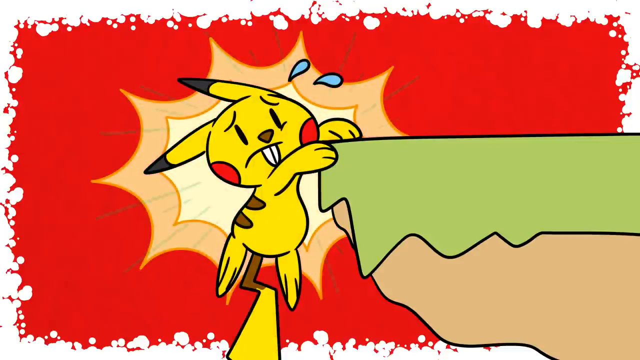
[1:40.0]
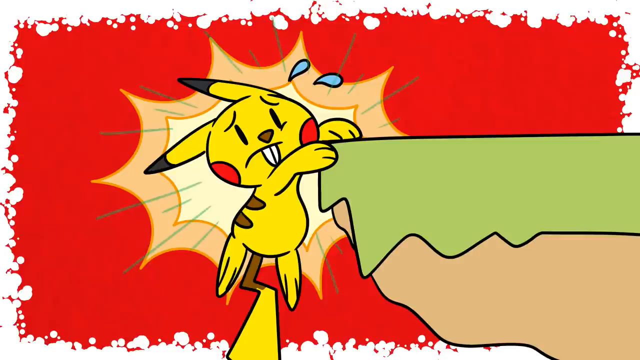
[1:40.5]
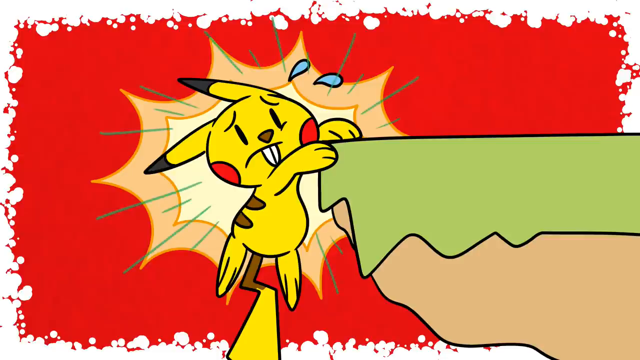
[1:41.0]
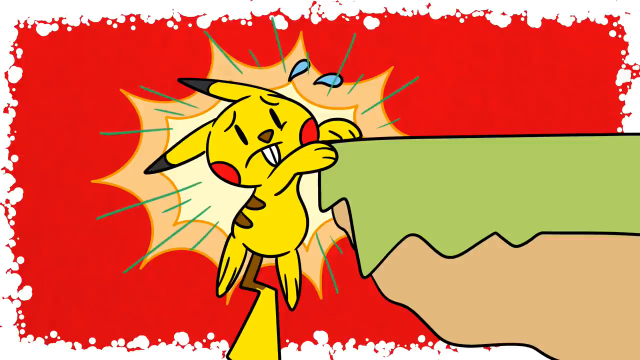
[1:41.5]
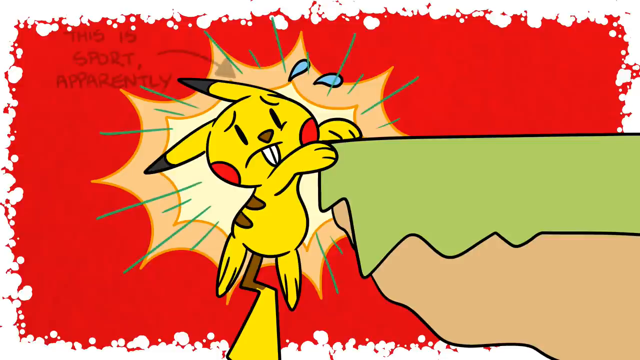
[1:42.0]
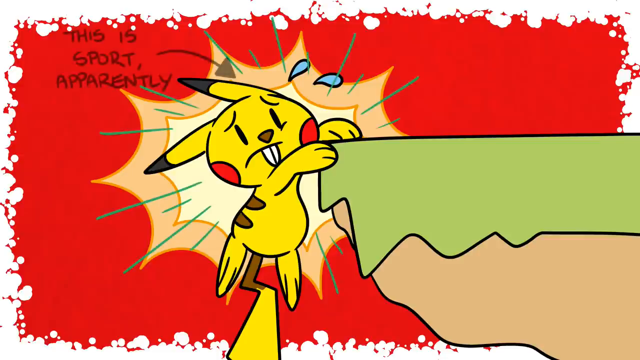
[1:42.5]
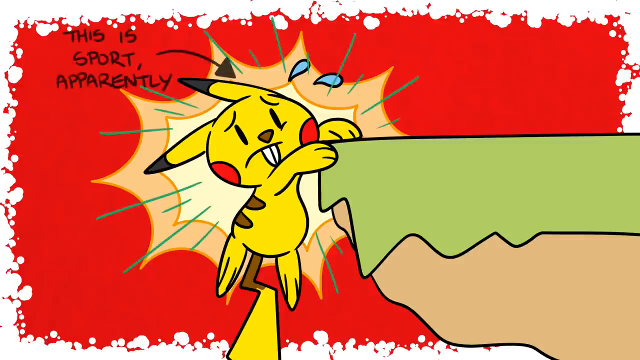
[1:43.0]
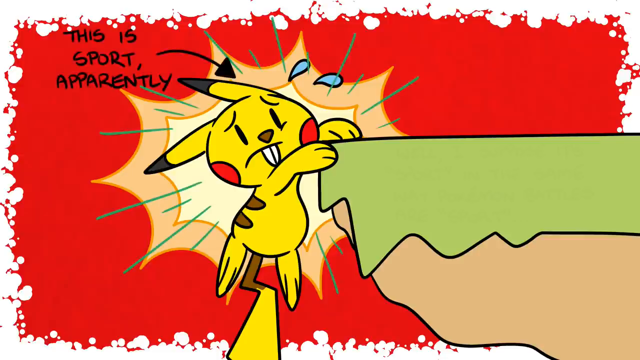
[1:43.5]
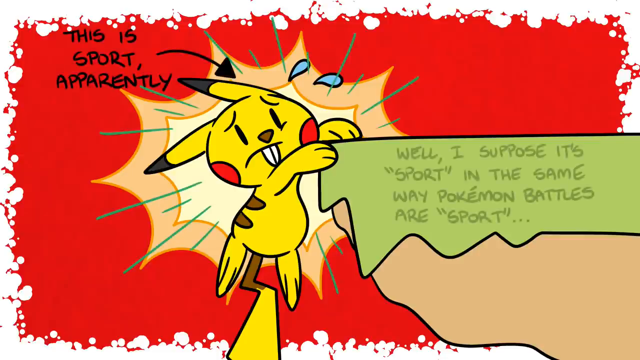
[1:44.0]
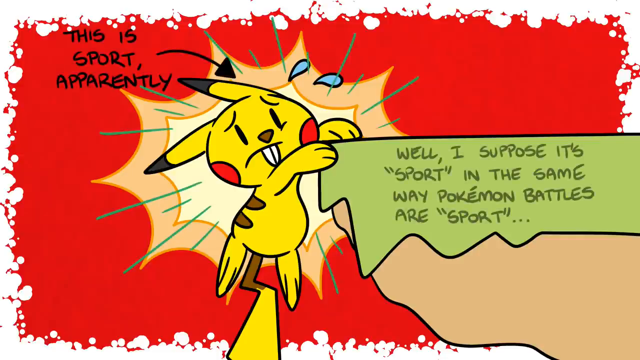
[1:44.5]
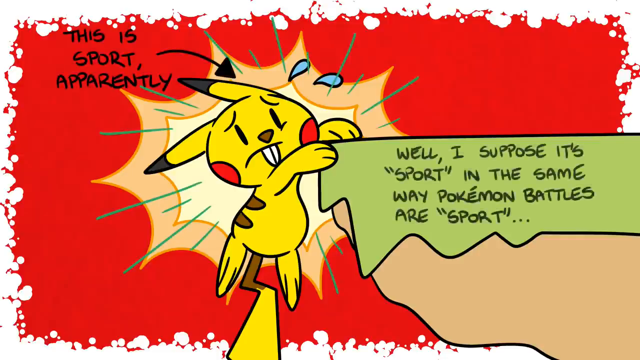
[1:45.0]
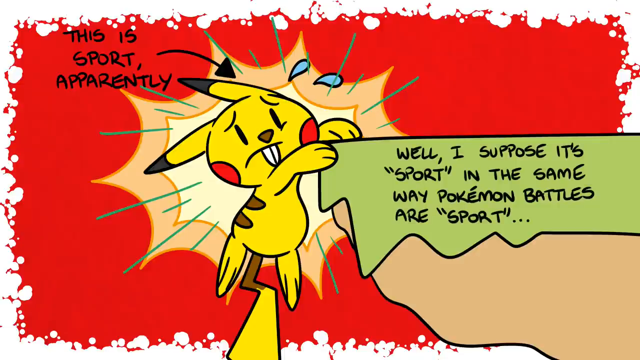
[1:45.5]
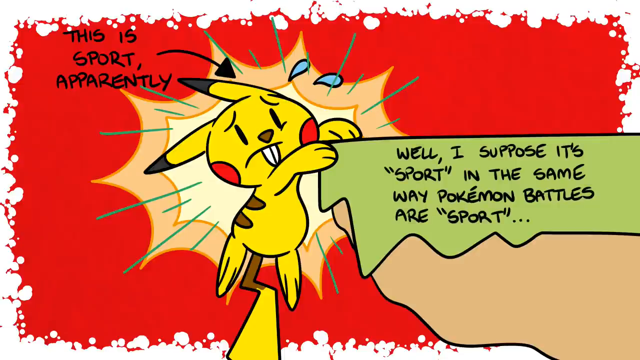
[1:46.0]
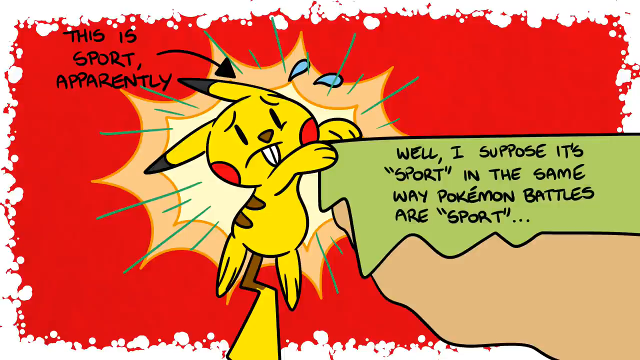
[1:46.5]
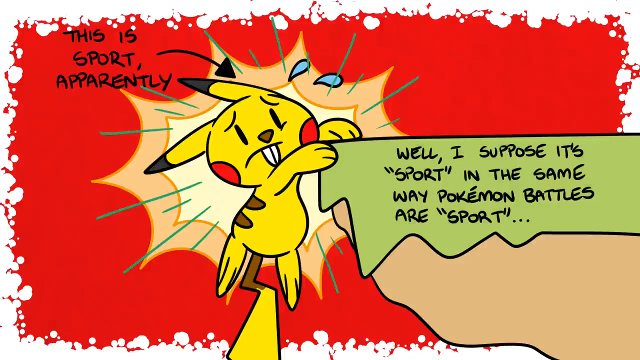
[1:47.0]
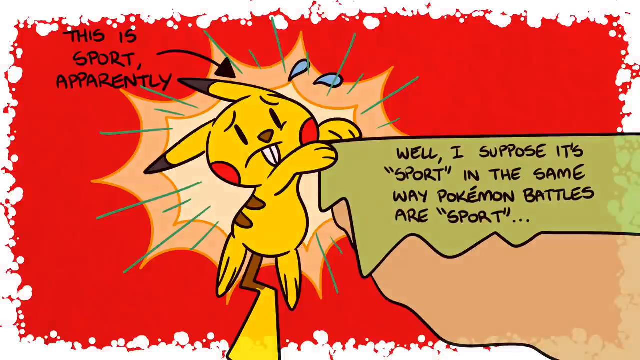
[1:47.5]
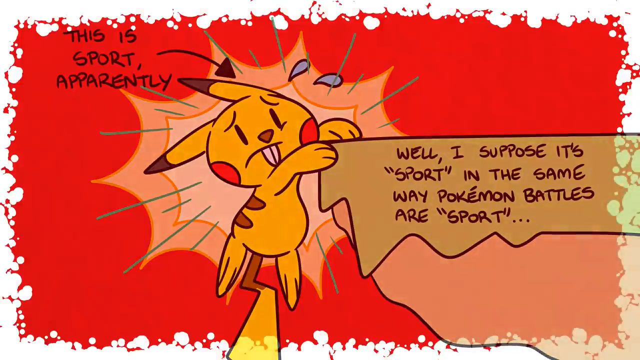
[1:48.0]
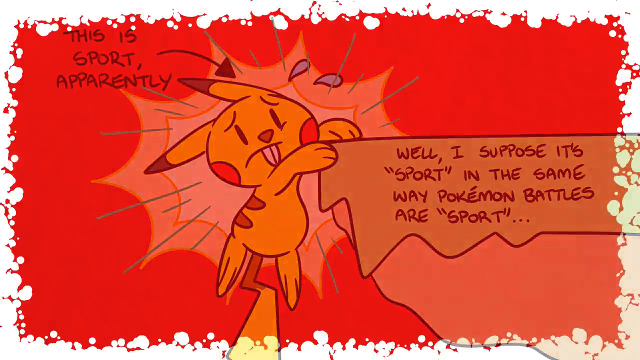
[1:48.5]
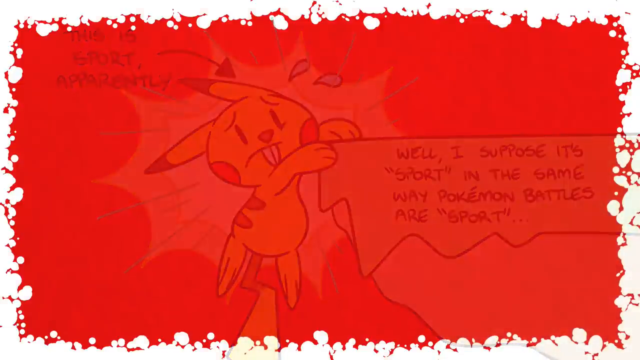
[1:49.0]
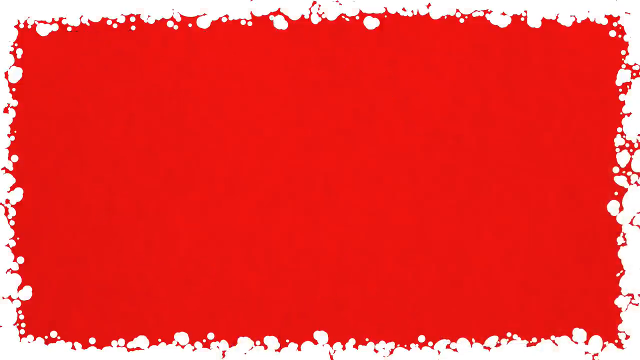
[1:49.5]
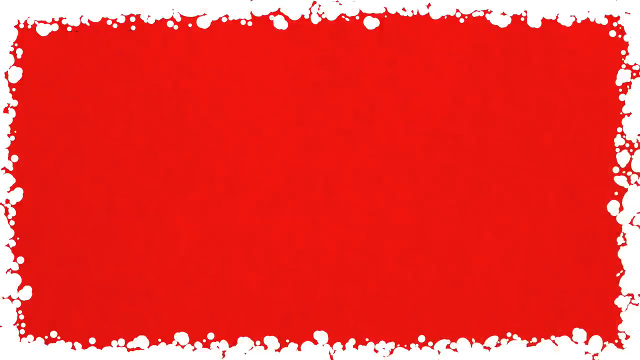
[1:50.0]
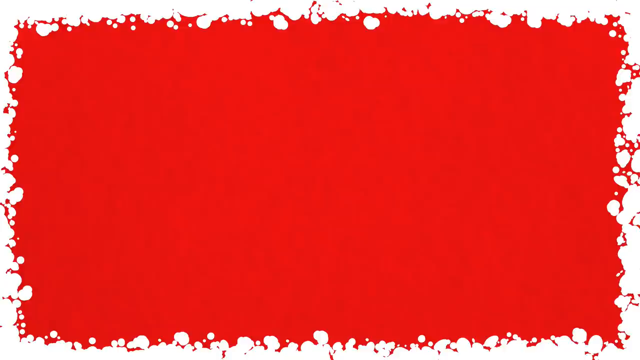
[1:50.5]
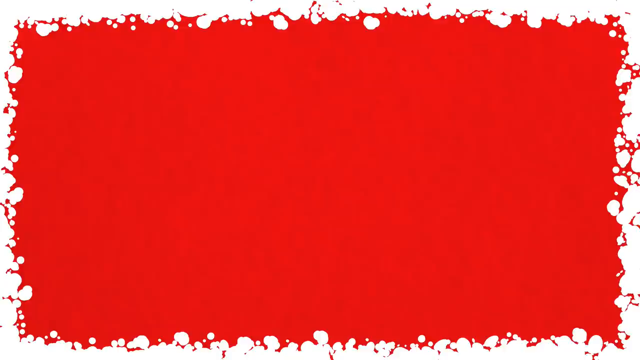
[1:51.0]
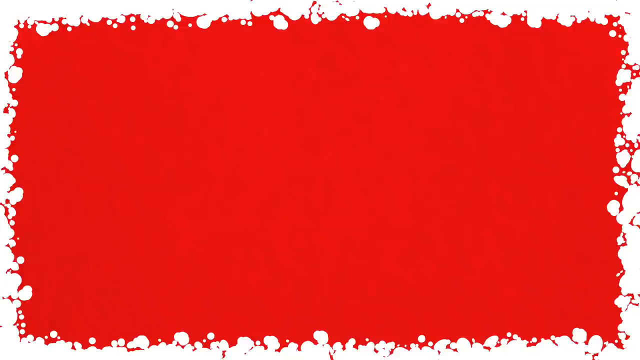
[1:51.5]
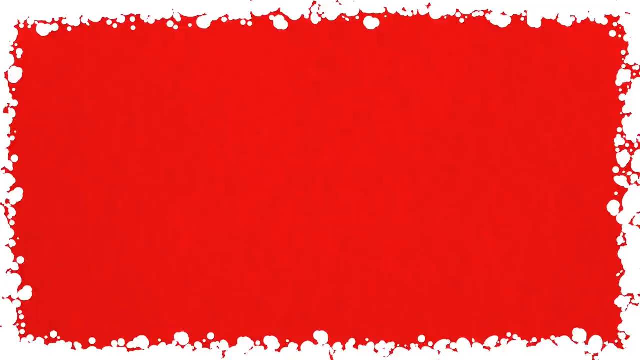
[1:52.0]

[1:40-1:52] Pikachu is still kind of holding on to the edge, looking very exasperated, with a bunch of marks around him; he is dripping sweat and does not look very happy. Black text appears on the screen reading "this is sport apparently," with an arrow directed towards the Pikachu. More black text appears on the ledge, reading "well I suppose it's sport in the same way Pokemon battles are 'sport'." Everything then fades off the screen, leaving just the red background with the white markings around the edge, which kind of look like blood or burn marks.